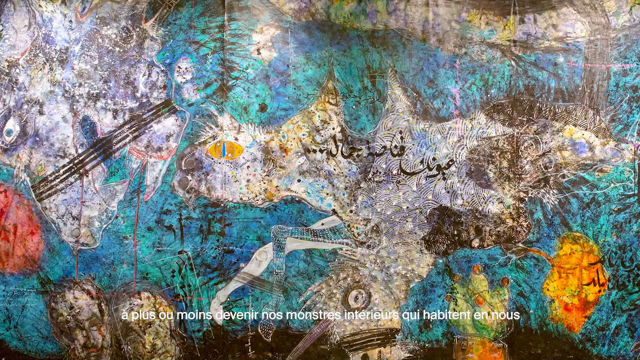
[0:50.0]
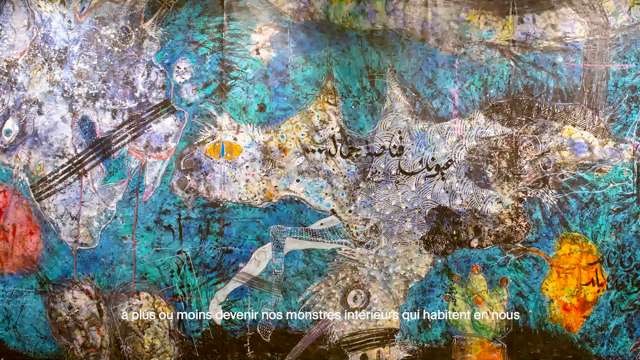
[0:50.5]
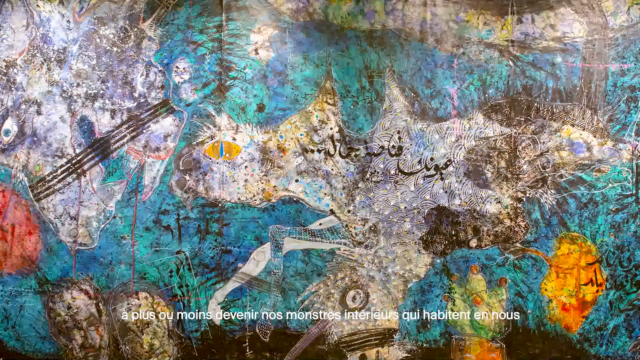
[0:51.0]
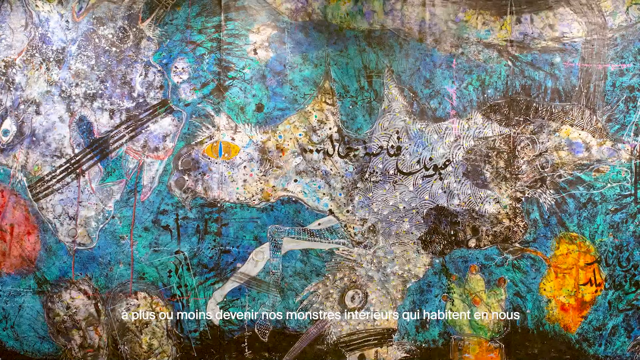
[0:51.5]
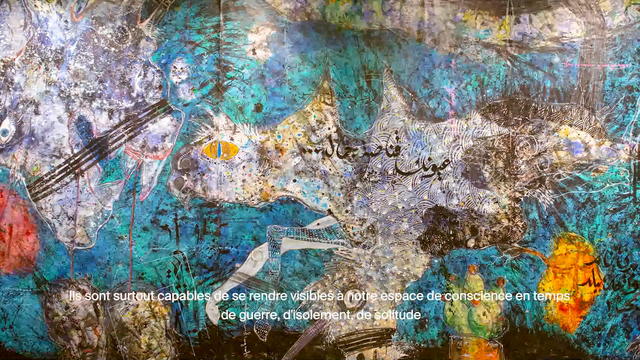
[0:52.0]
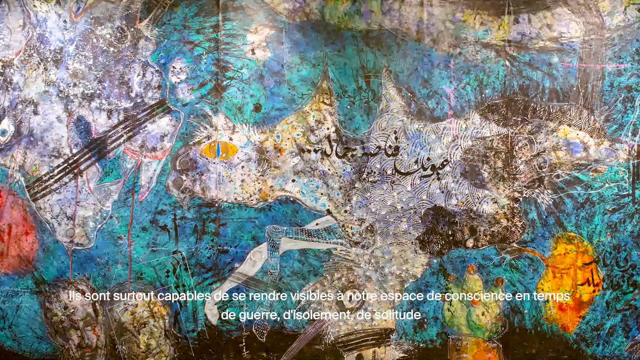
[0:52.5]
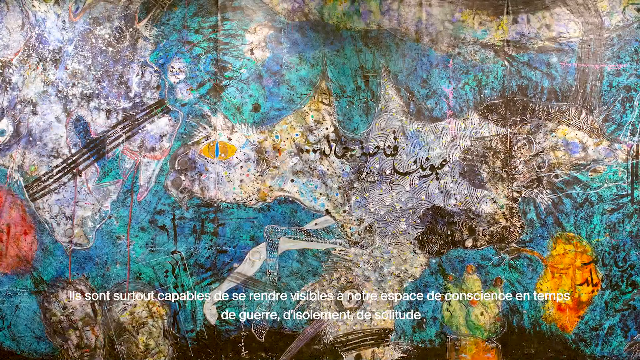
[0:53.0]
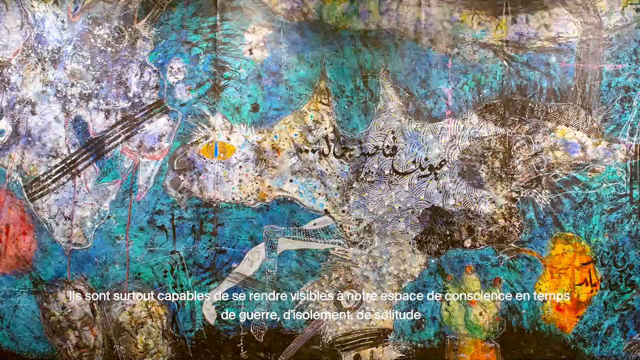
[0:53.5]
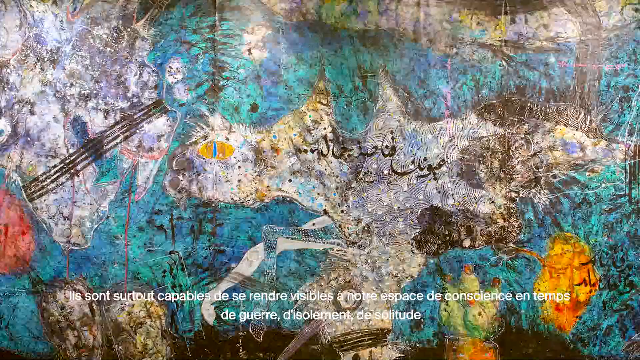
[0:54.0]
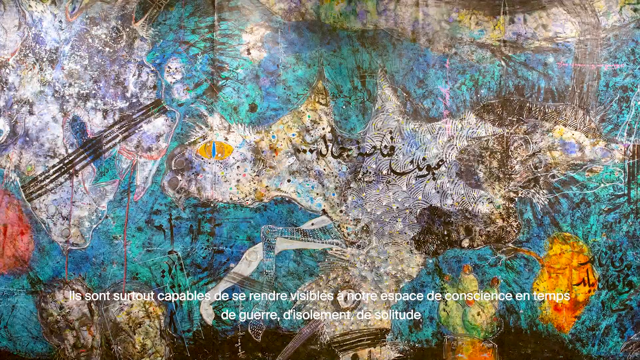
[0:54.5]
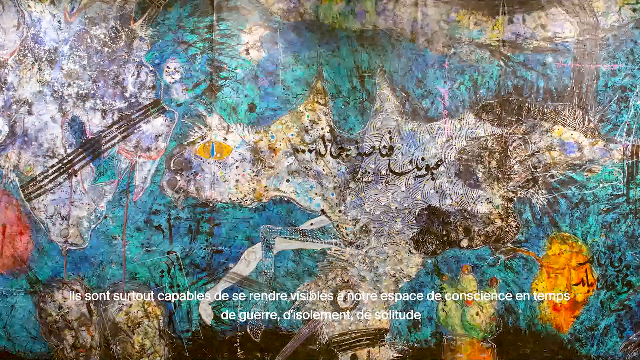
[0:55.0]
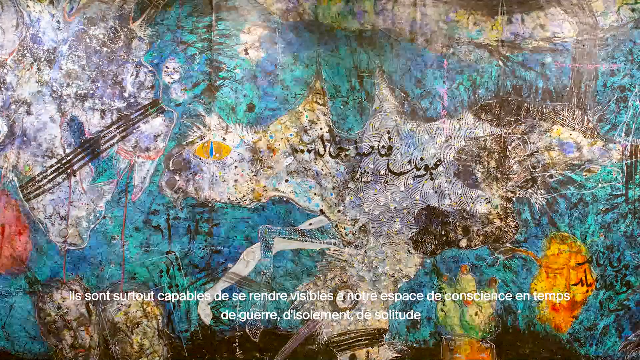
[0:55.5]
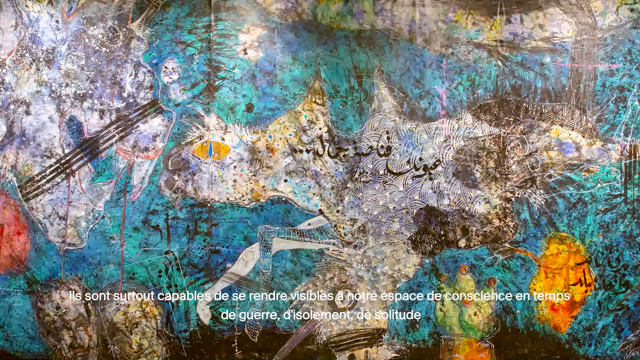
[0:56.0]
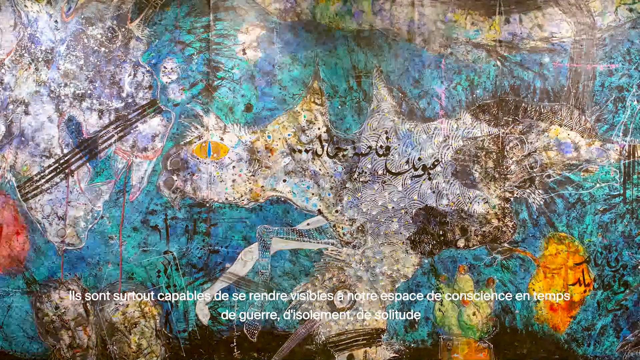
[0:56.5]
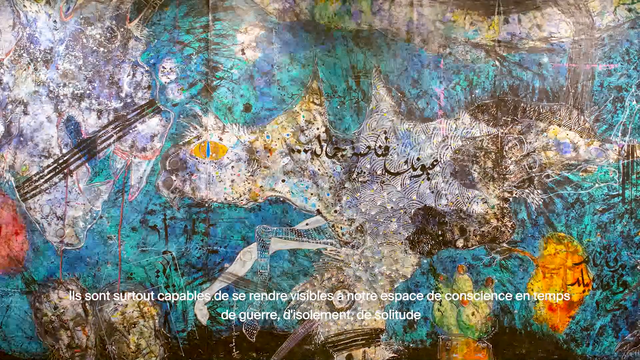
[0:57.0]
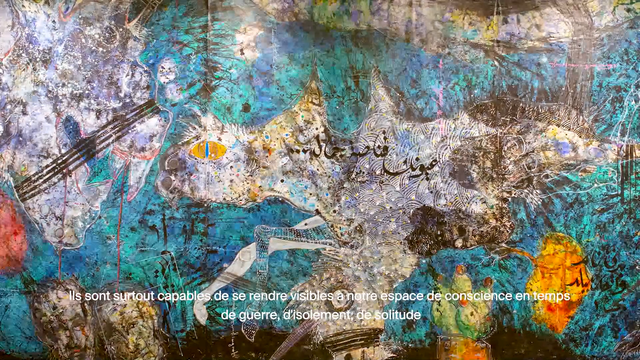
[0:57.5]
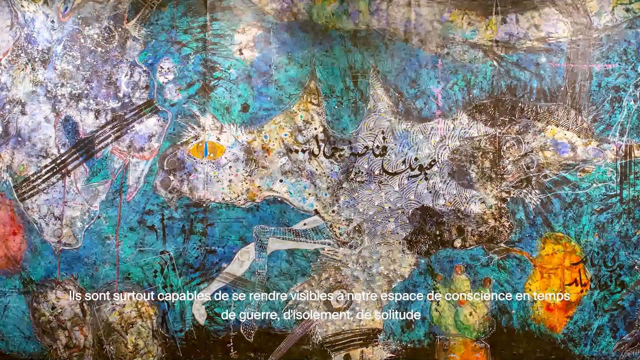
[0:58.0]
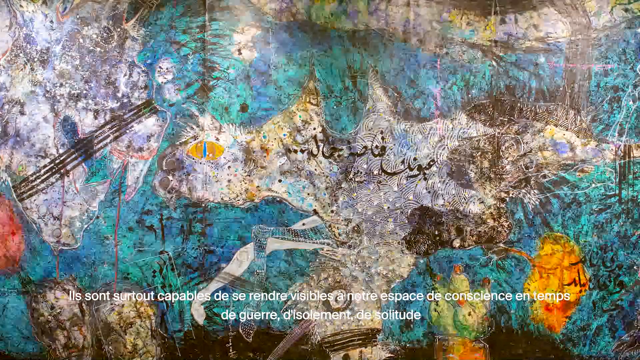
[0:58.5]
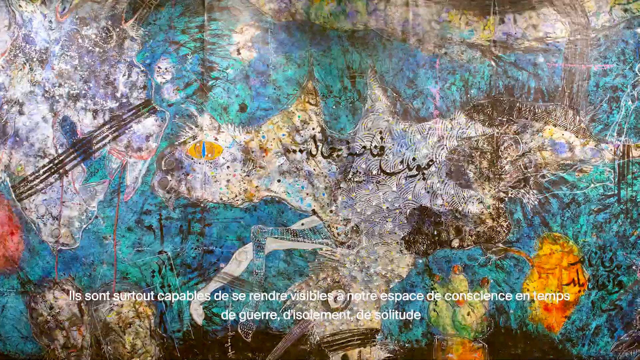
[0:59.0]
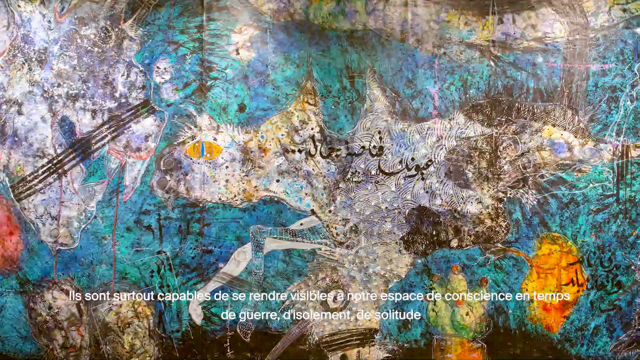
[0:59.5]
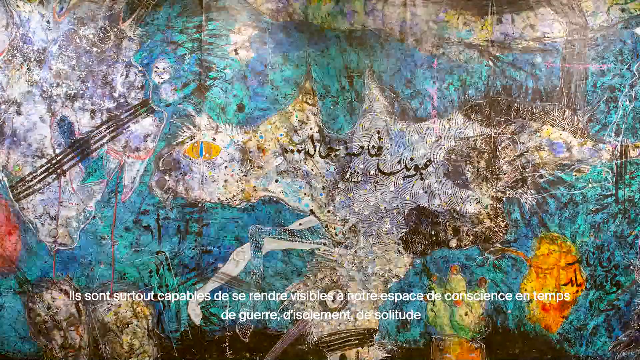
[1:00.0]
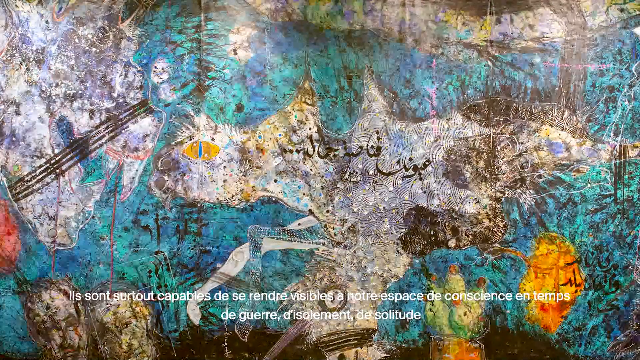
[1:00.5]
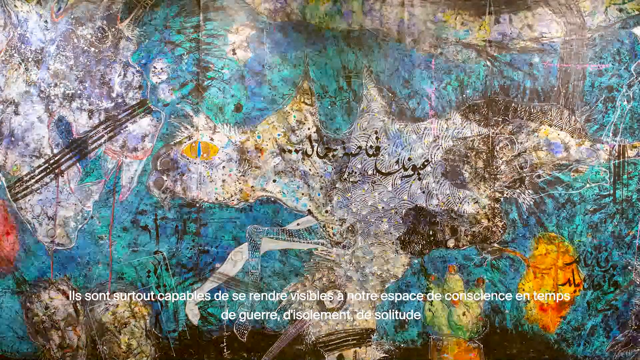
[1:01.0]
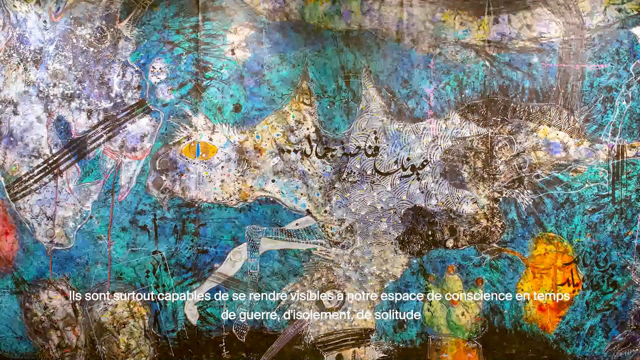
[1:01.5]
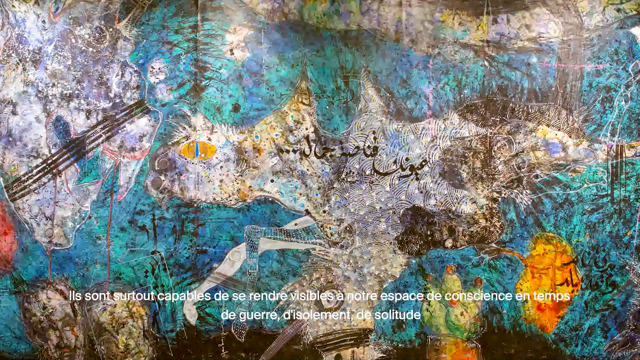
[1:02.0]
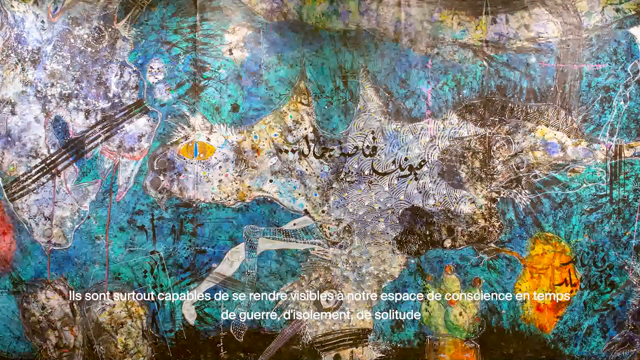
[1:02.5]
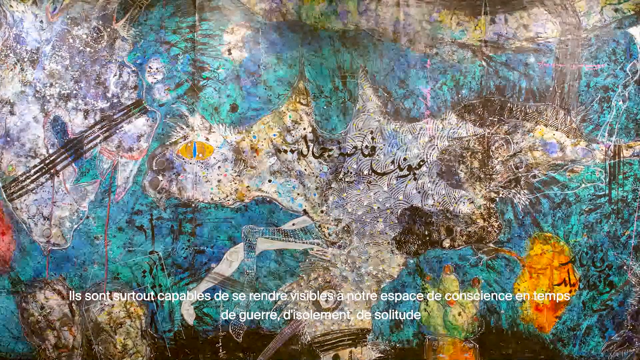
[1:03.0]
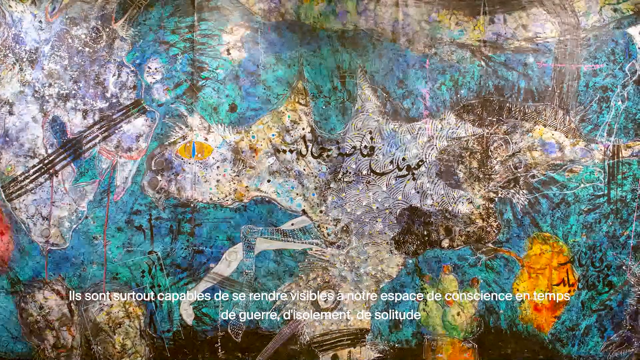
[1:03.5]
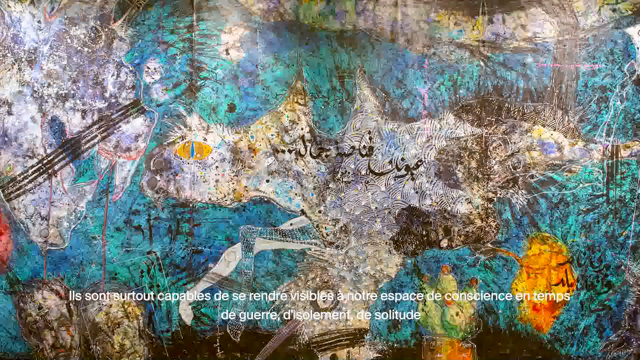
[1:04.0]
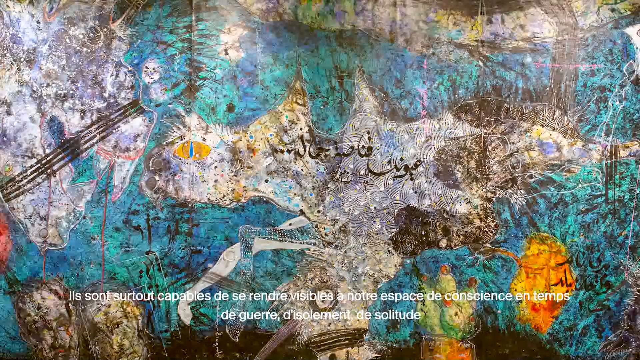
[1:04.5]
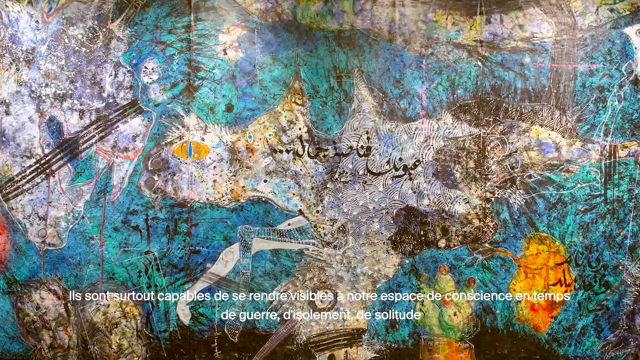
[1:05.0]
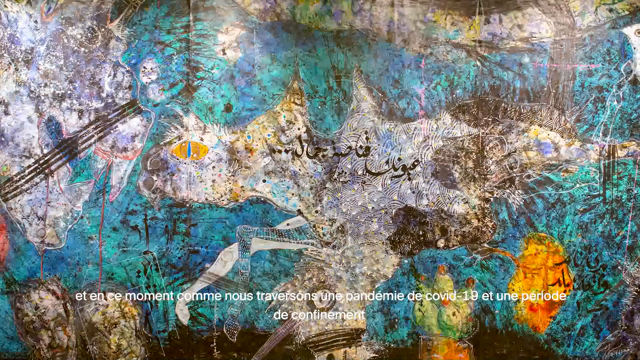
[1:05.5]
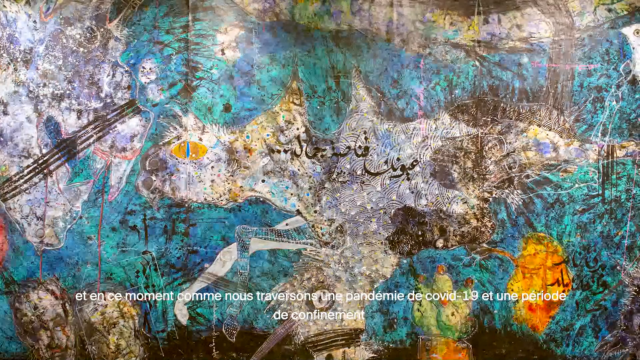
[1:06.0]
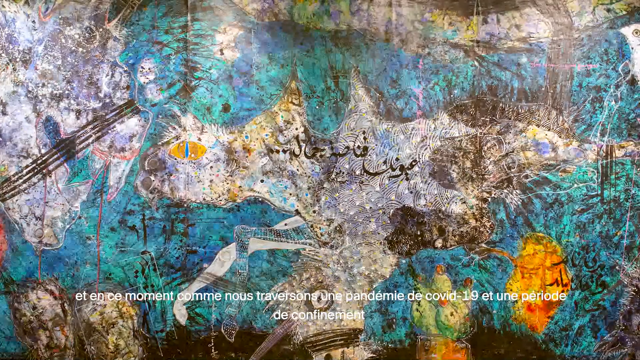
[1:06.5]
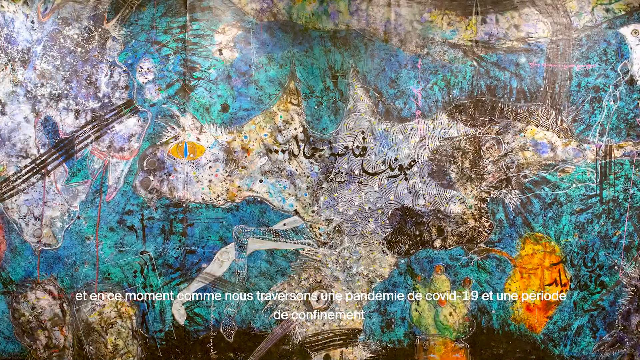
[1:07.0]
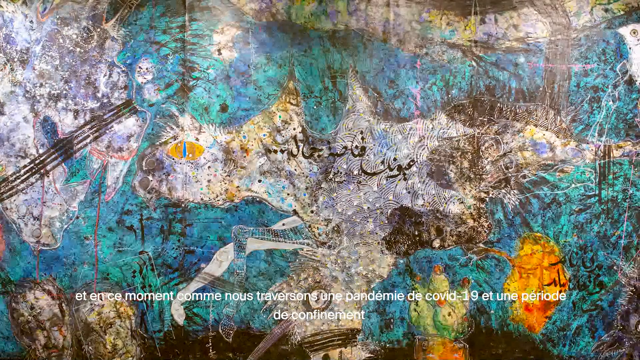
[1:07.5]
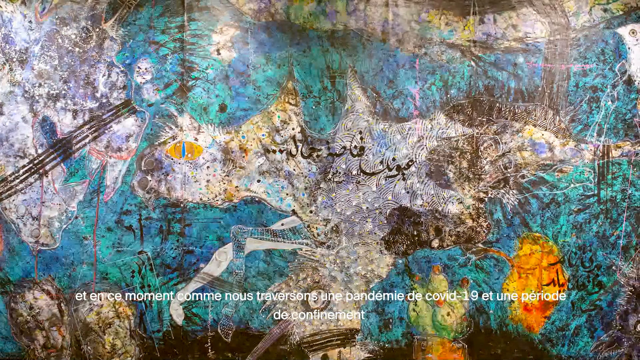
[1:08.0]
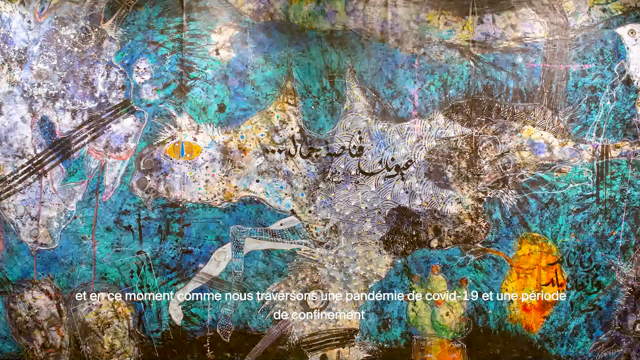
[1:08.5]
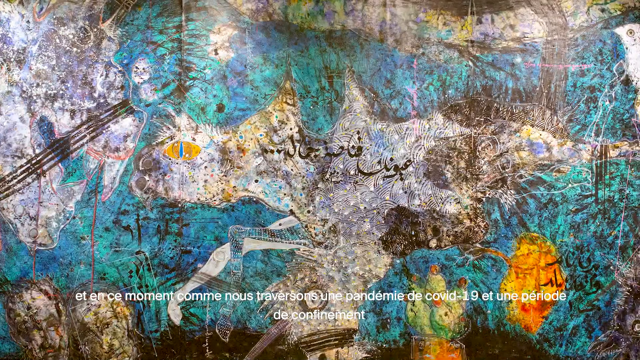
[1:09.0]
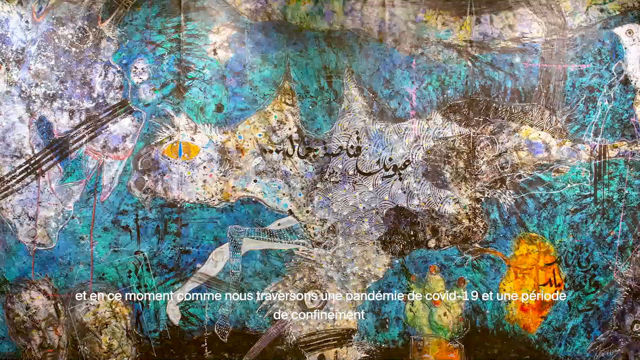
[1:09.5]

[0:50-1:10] The center of a painting is shown as the camera slowly moves to the right to reveal a different part of it. The painting appears to show different animals or shapes and colors. It looks very large, as if it takes up a whole wall. Nobody is present and the setting does not change; apart from subtitles at the bottom, the shot only focuses on the painting. It contains an image with a cat eye and a horse face, and what looks like a heart and a cactus, with the animals in different colors.